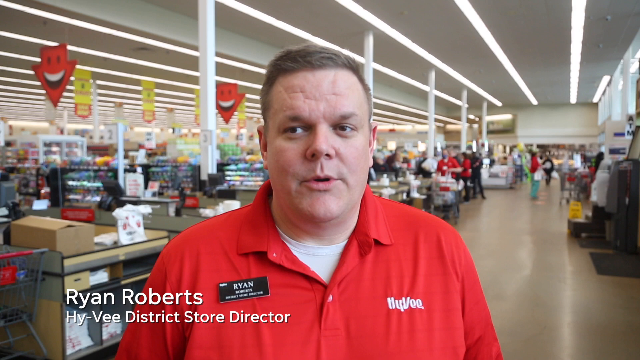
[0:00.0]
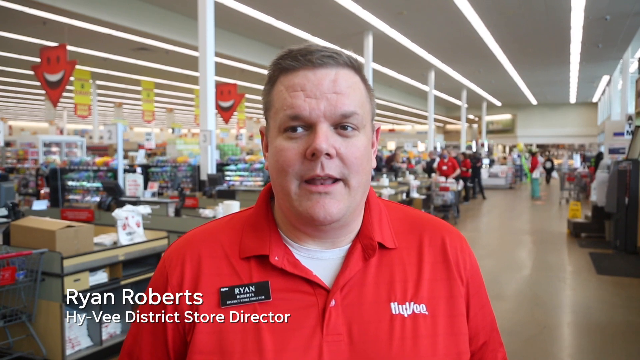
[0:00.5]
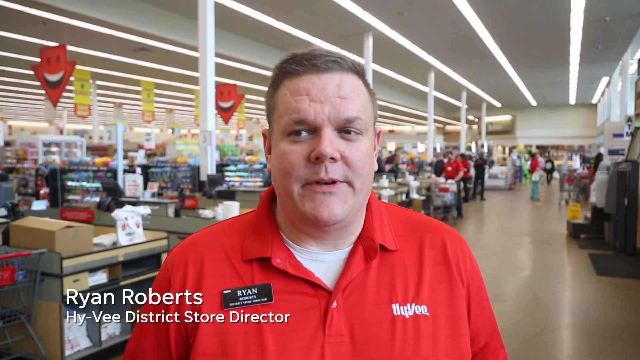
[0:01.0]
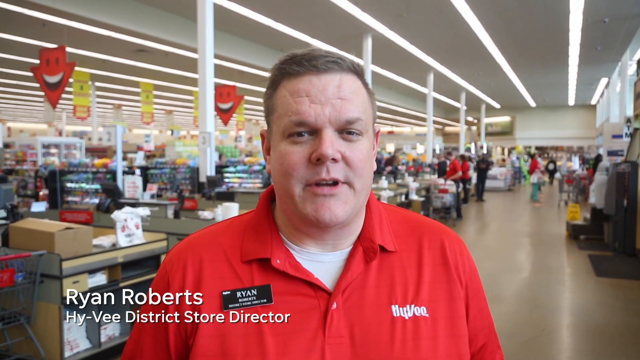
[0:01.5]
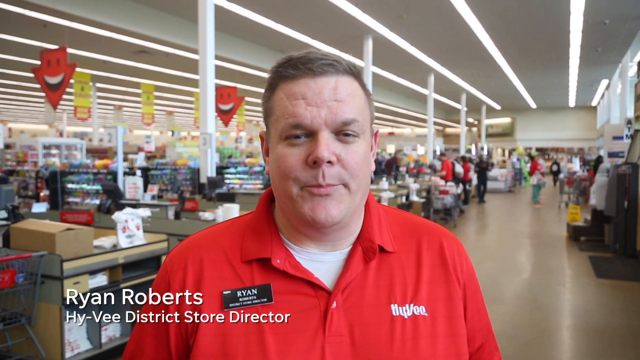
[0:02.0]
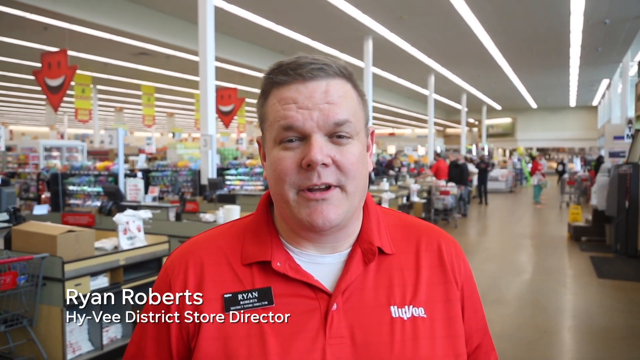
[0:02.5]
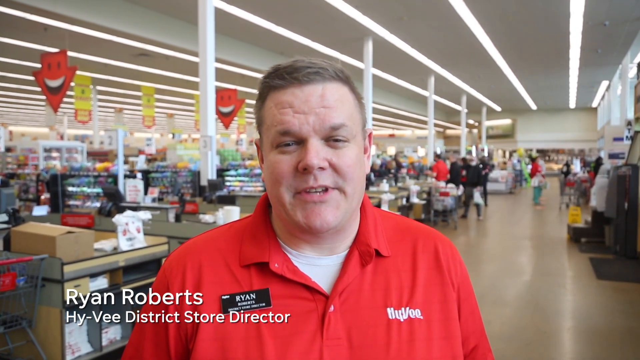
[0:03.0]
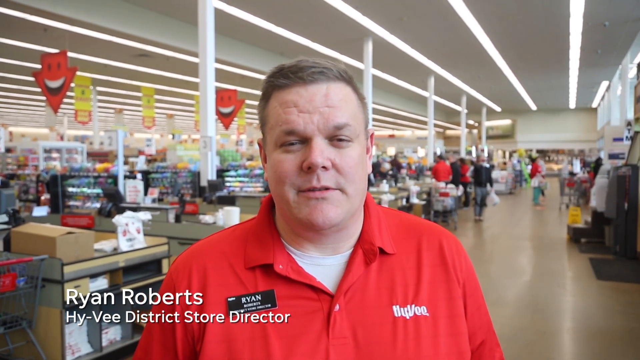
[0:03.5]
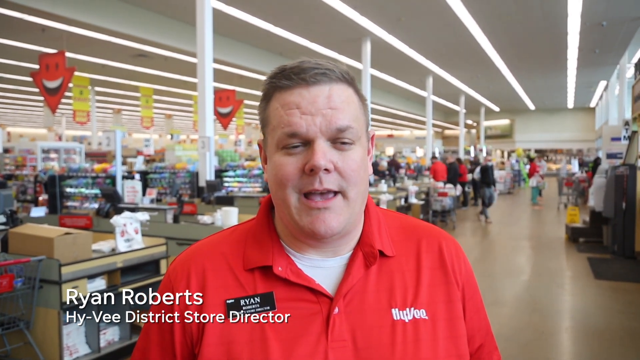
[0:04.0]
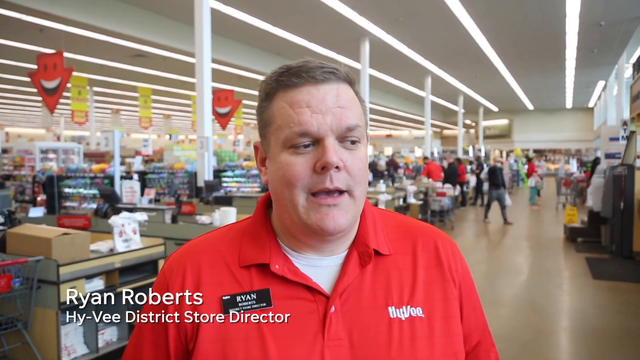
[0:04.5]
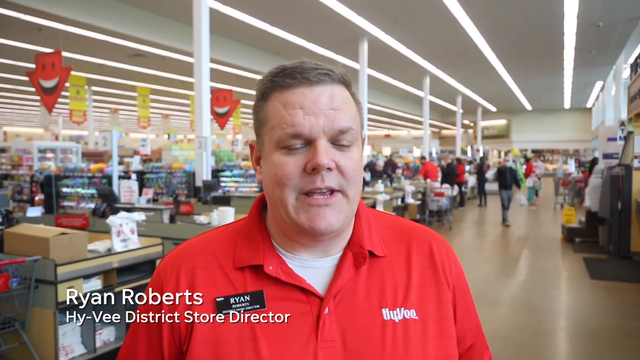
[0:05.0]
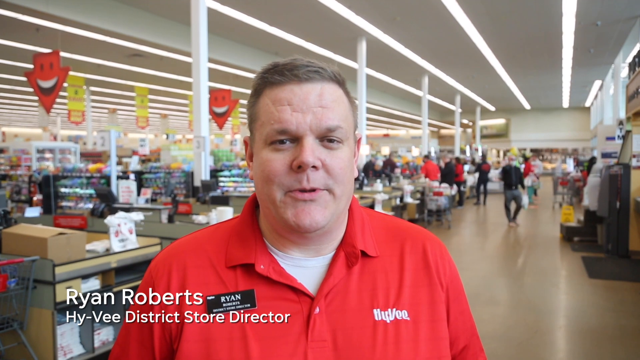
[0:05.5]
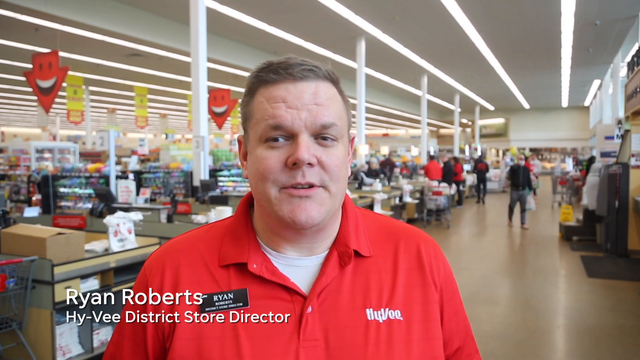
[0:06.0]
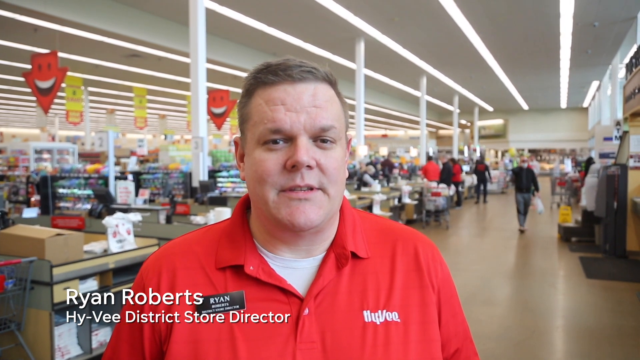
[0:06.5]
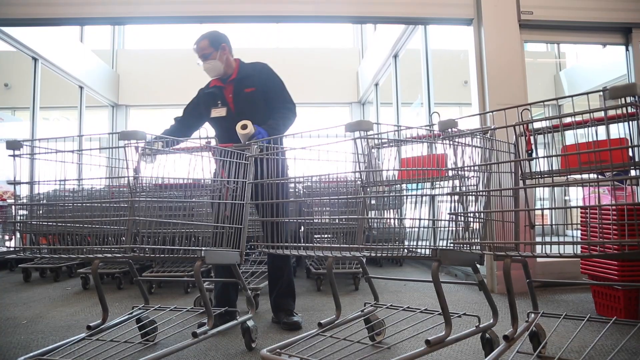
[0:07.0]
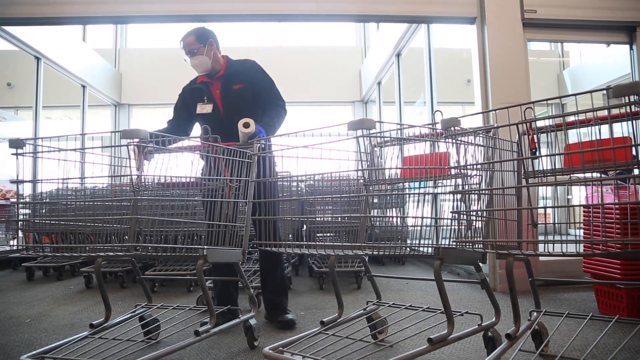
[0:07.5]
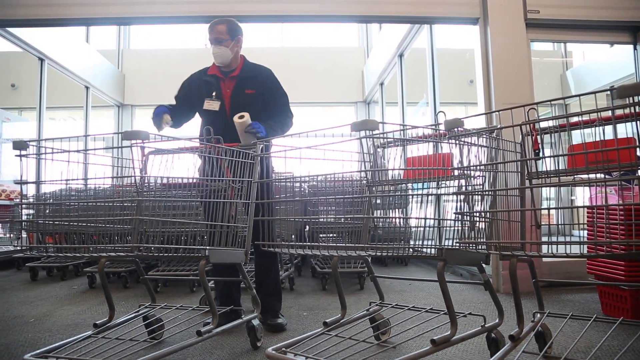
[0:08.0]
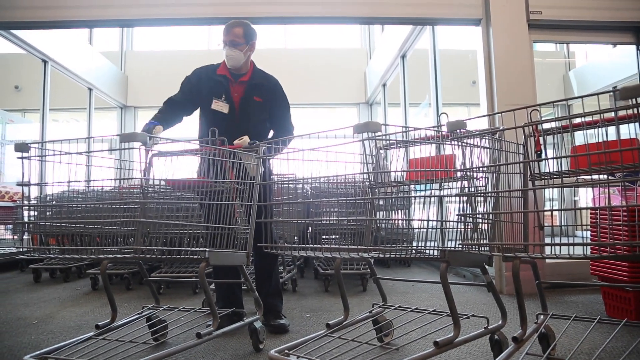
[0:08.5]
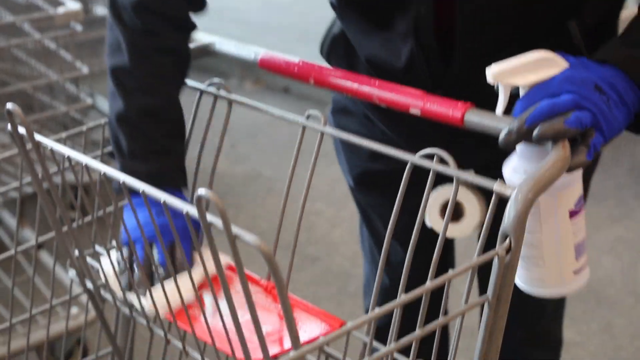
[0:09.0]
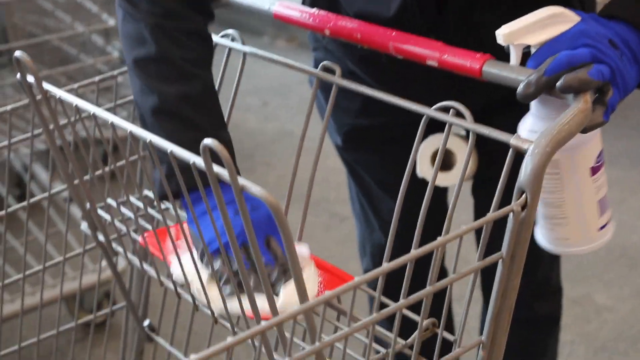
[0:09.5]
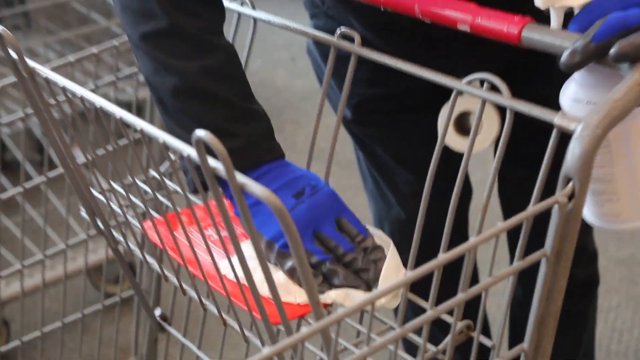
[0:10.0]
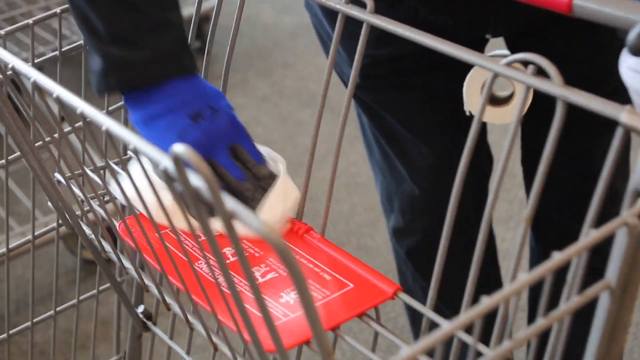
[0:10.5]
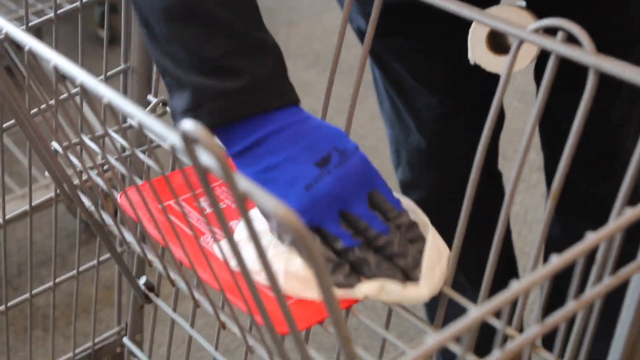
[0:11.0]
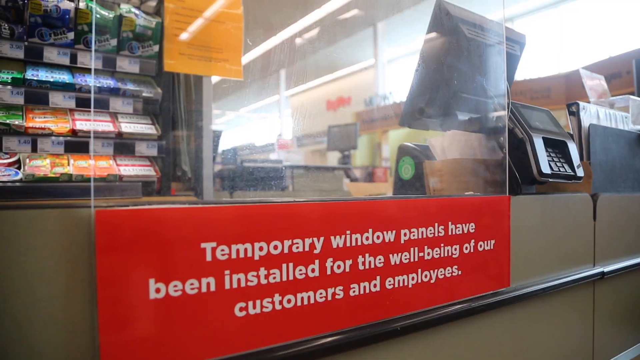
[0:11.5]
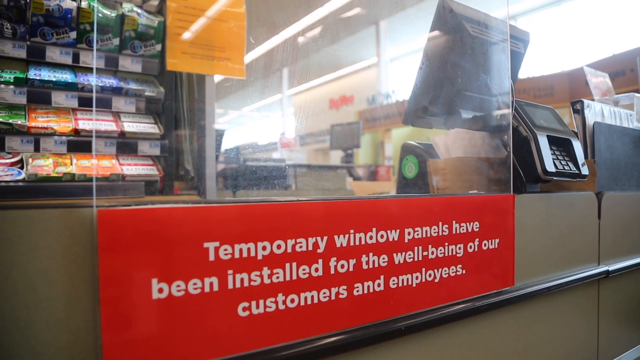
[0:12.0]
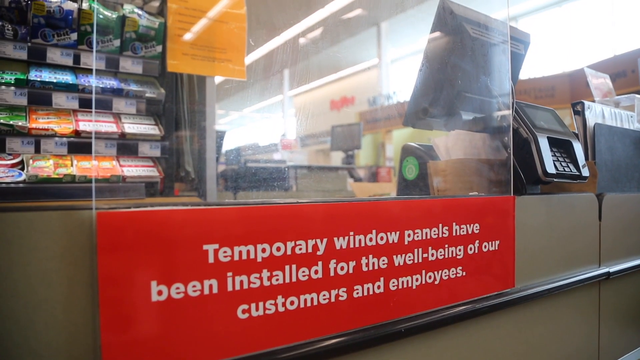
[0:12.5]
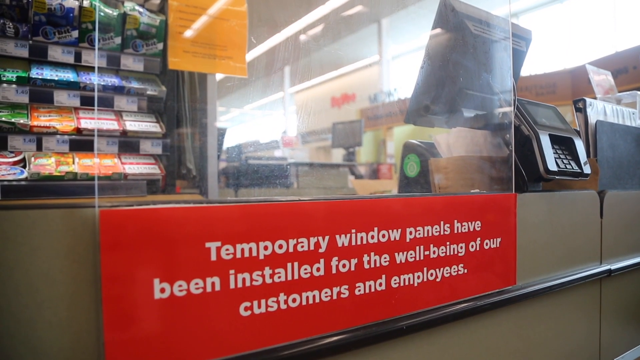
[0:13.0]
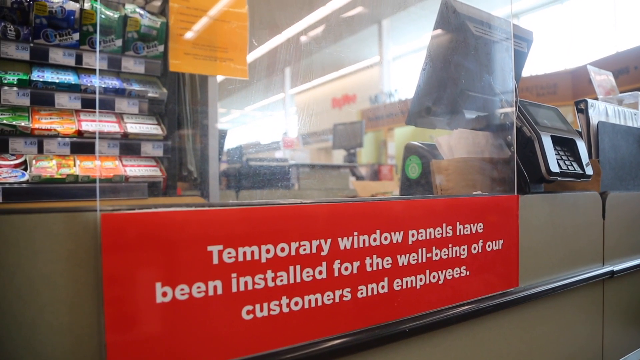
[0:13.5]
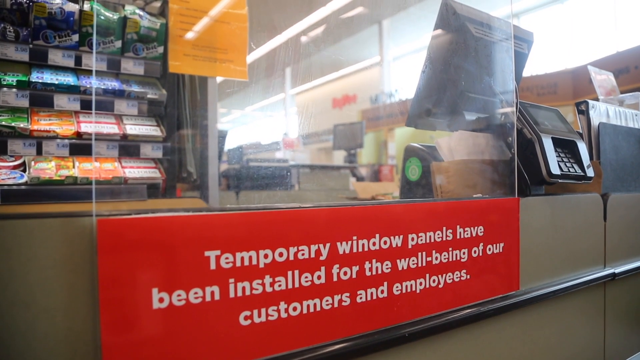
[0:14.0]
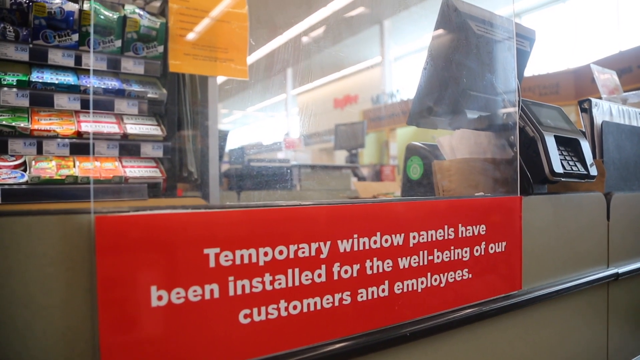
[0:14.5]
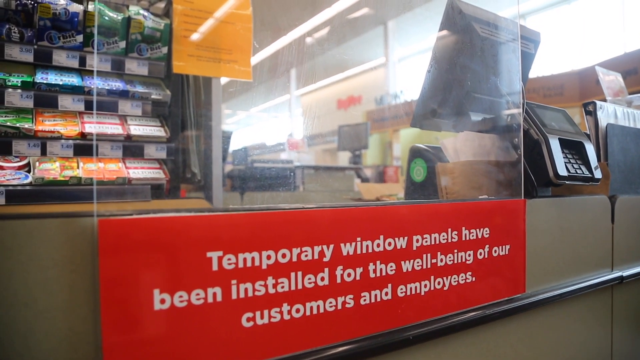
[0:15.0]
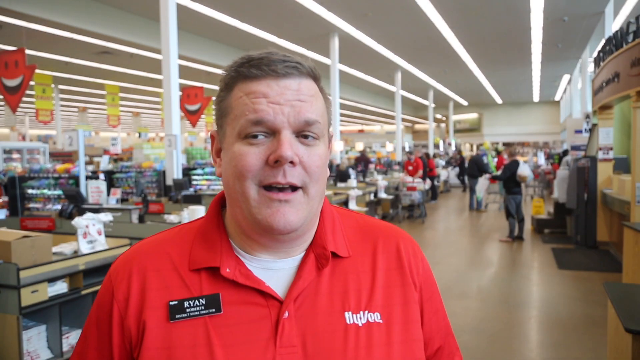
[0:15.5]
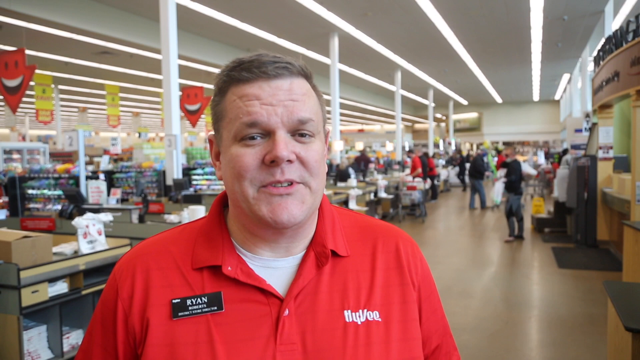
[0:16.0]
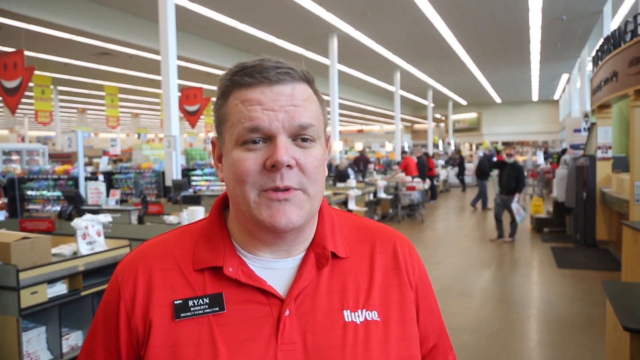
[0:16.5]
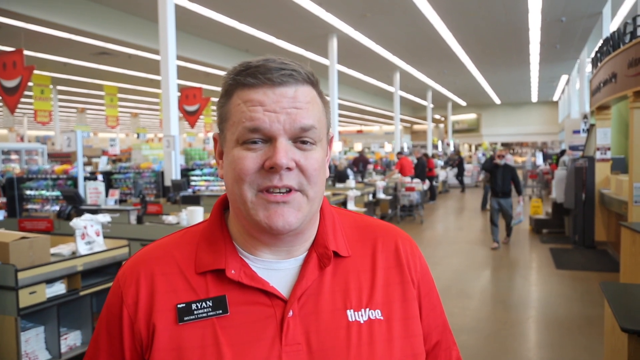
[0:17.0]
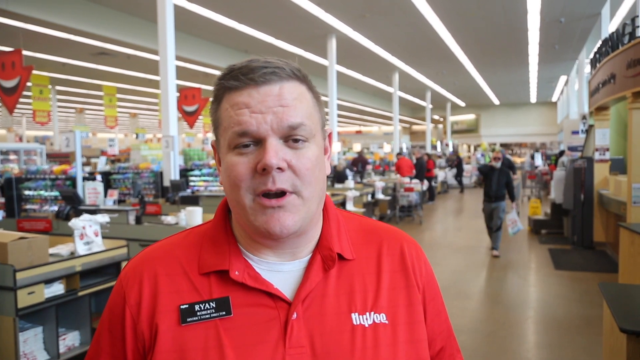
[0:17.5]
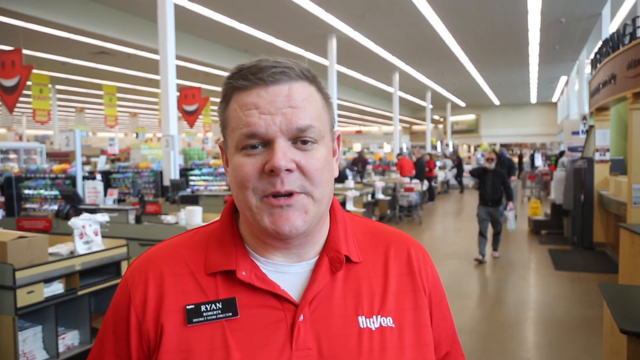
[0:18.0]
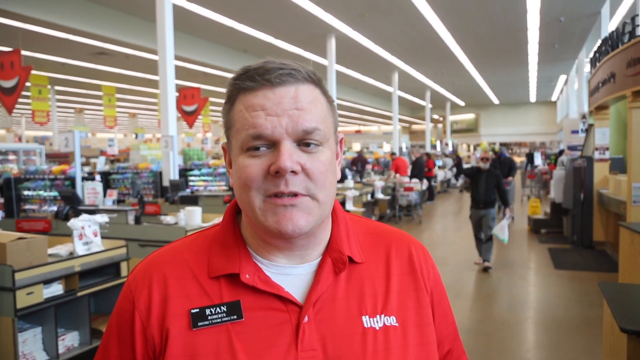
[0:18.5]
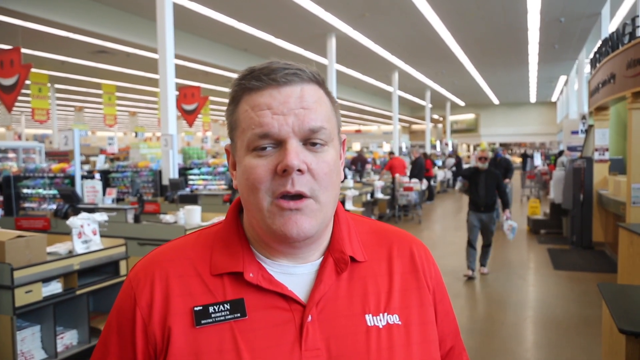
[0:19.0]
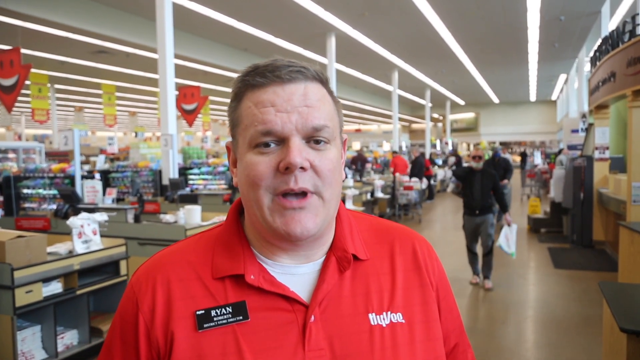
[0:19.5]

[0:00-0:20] A man named Ryan appears in a zoomed-in, chest-up shot, talking and looking at the camera inside a store. He wears a black name tag on his right side and a red polo with "Hy-Vee" in white letters on the left side. The name "Ryan Roberts" appears in white text in the bottom left corner of the screen, and he is a Hy-Vee District Store Director. Behind him, people in masks are shopping. The video transitions to another employee kind of wiping down the top of a shopping cart, then pans to an image at the checkout line showing "temporary window panels have been installed for the well-being of our customers and employees," with panels almost like plexiglass. It then returns to Ryan talking as more people leave the store and go into the checkout line.